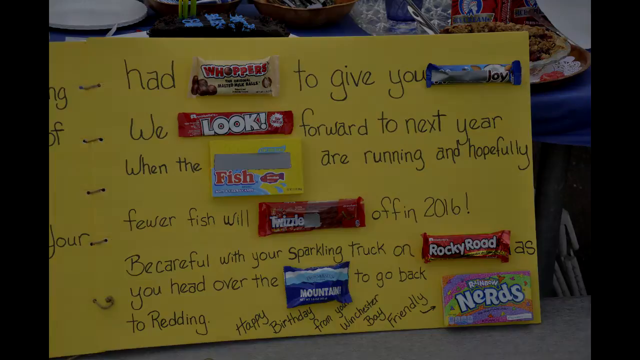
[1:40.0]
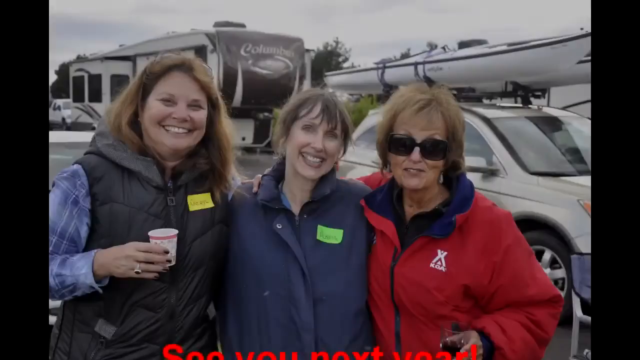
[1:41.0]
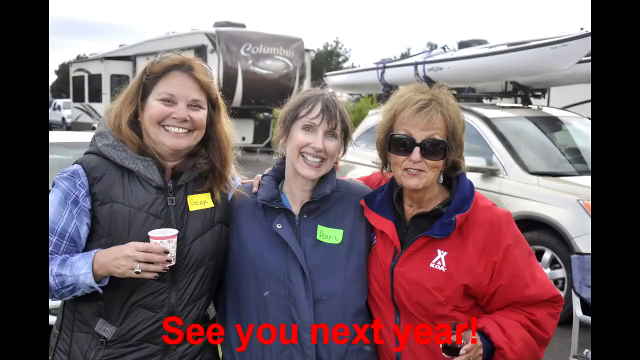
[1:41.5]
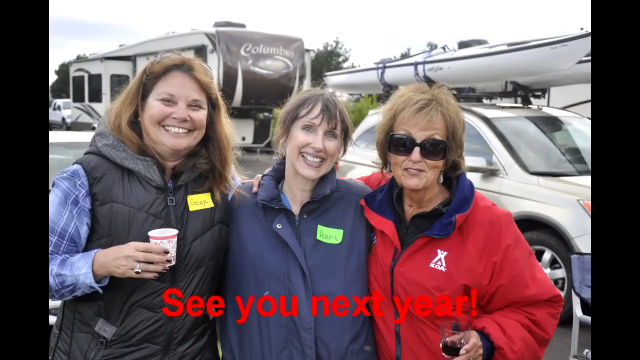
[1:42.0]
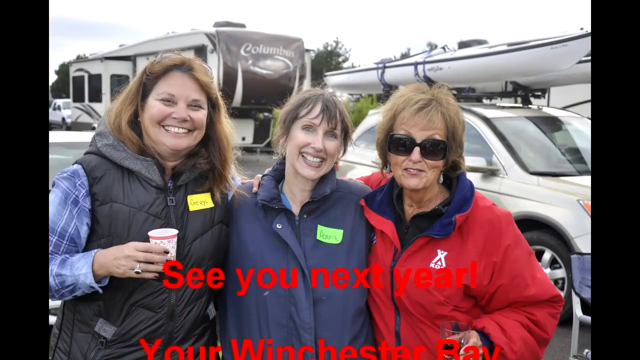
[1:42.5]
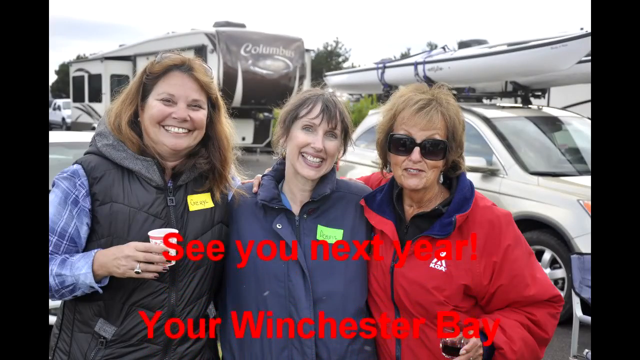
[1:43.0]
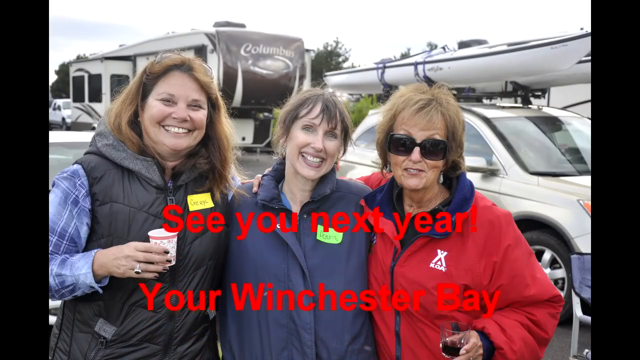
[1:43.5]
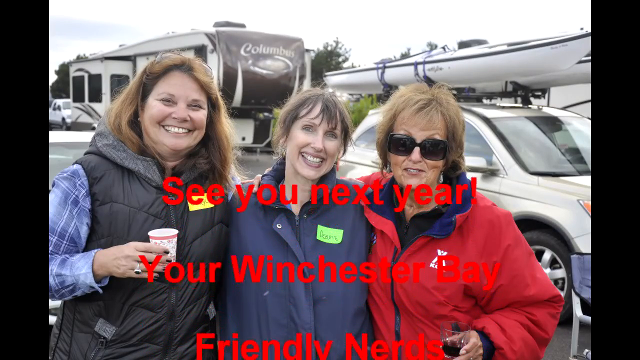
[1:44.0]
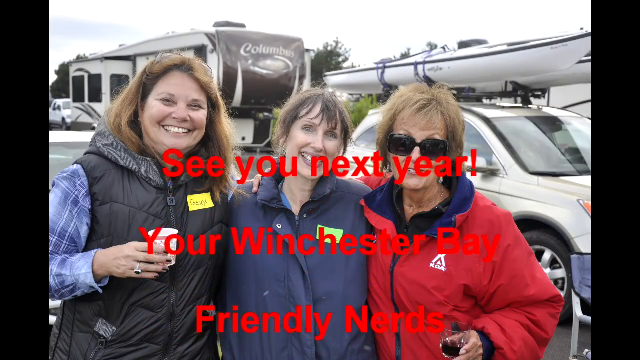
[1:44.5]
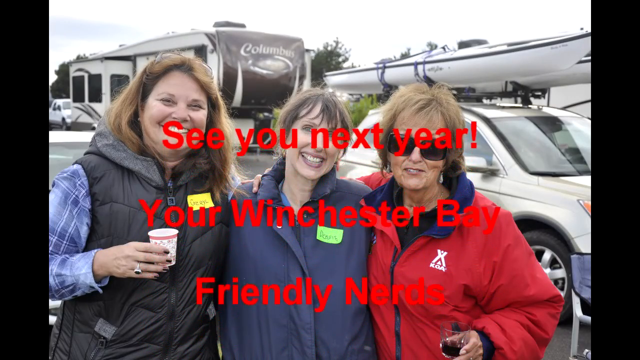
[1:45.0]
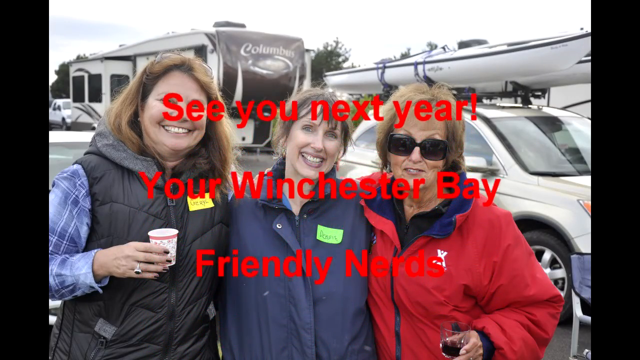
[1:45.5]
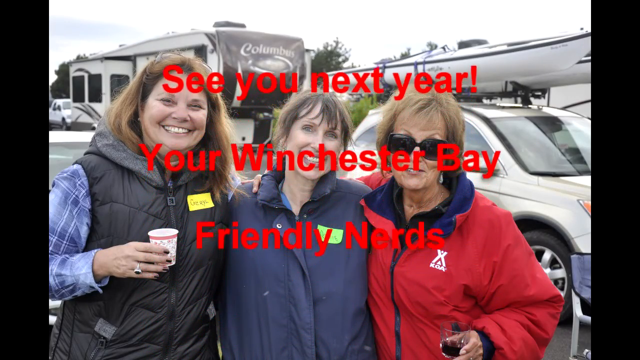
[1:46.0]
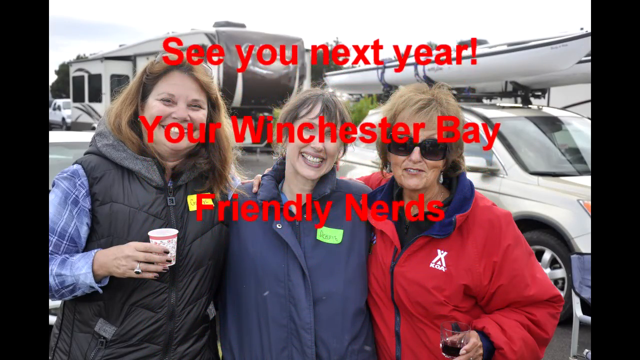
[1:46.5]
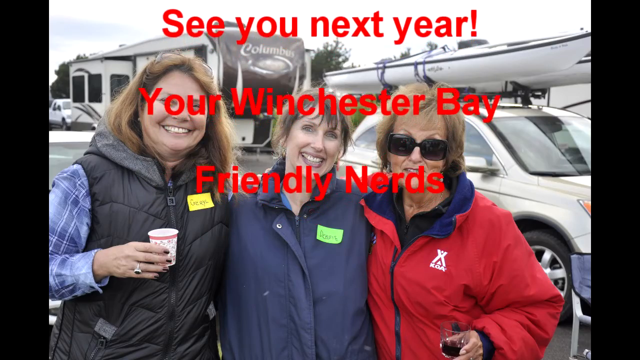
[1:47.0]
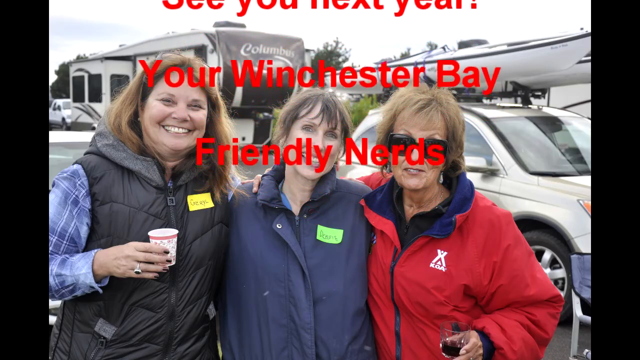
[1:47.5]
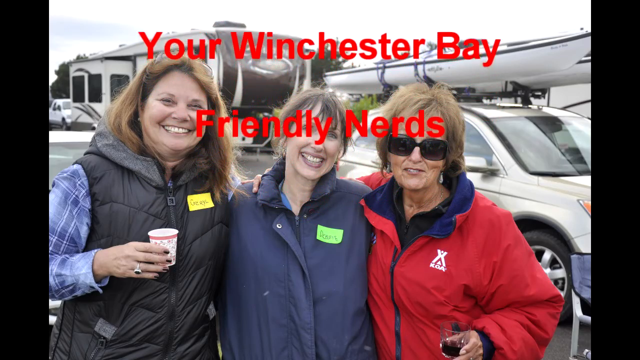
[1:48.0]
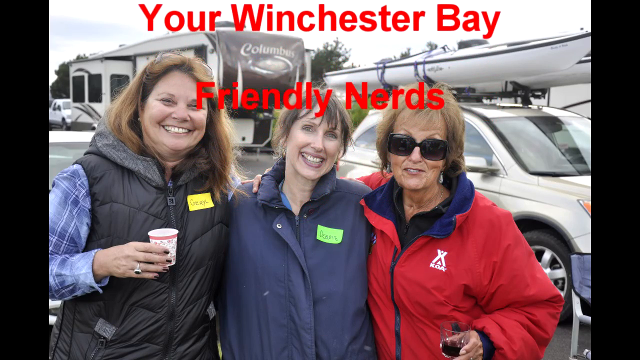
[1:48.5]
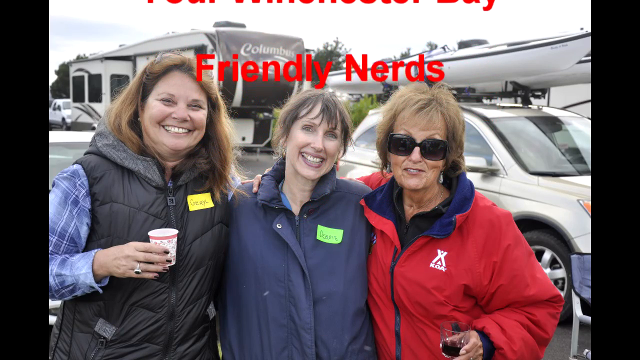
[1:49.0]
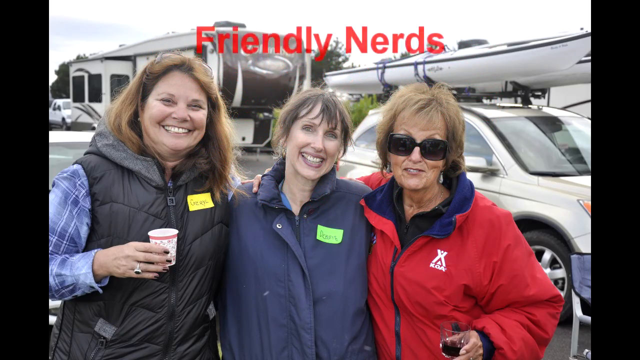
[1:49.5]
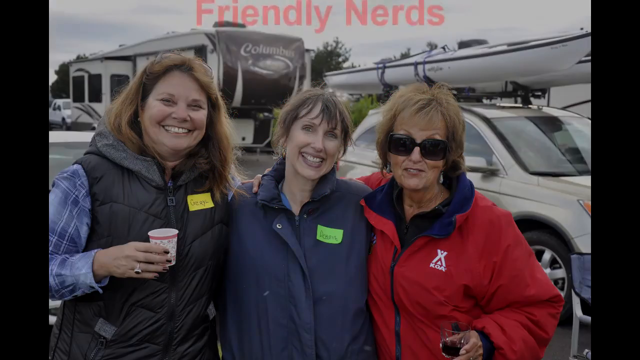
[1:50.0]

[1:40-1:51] A yellow card written in black ink is shown with many candies and happy birthday wishes, each candy filling in a sentence written on the card. The background seems to show a birthday: there is a cake, food on the table, and plates with blue decoration. Then three old white women appear, smiling, with a bus and a car with a boat on top of it, suggesting they may be on vacation. One wears a red jacket and black sunglasses, one wears a navy jacket, and the other wears a black jacket. The women are possibly the ones who sent the card.